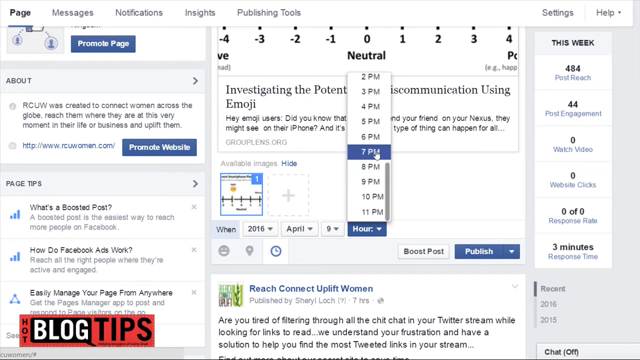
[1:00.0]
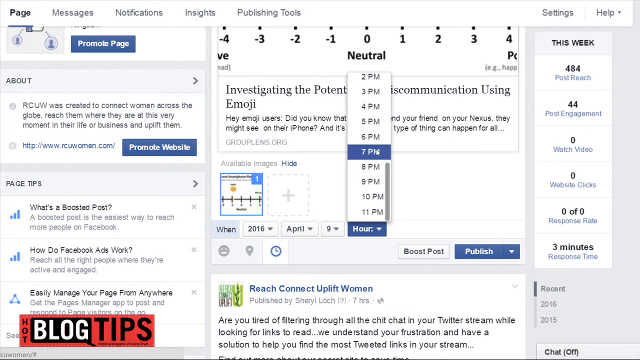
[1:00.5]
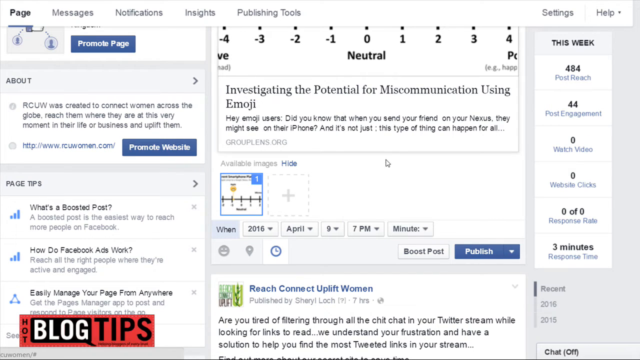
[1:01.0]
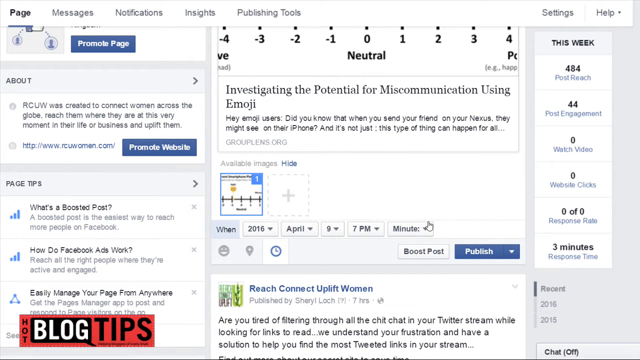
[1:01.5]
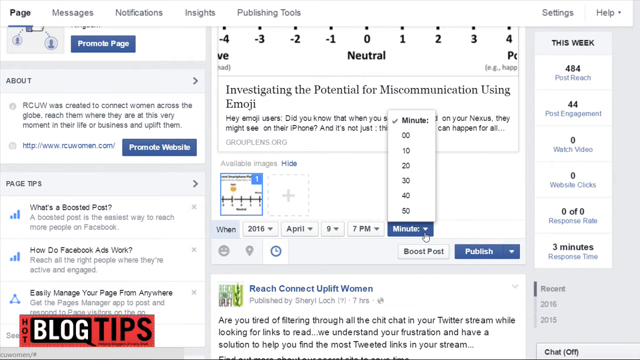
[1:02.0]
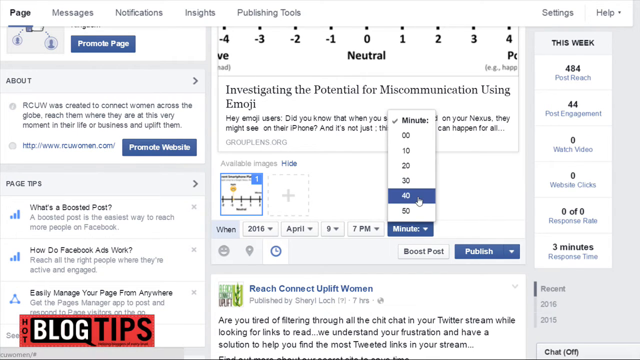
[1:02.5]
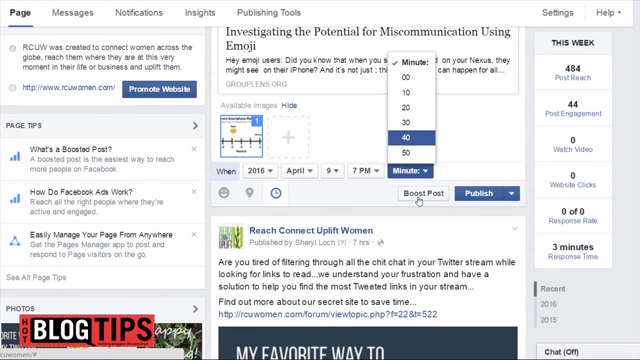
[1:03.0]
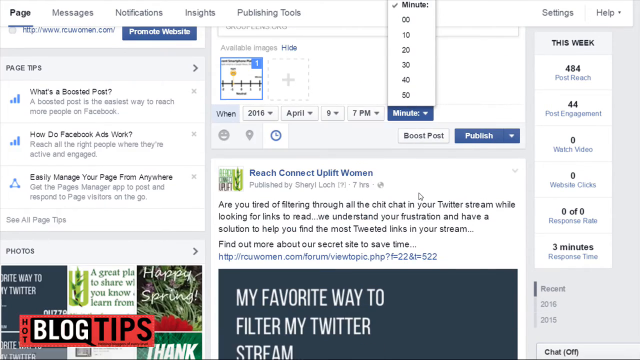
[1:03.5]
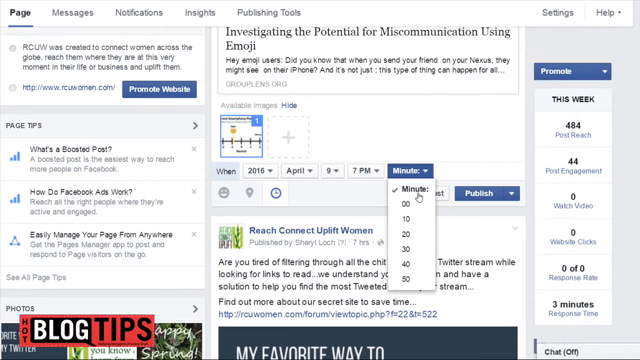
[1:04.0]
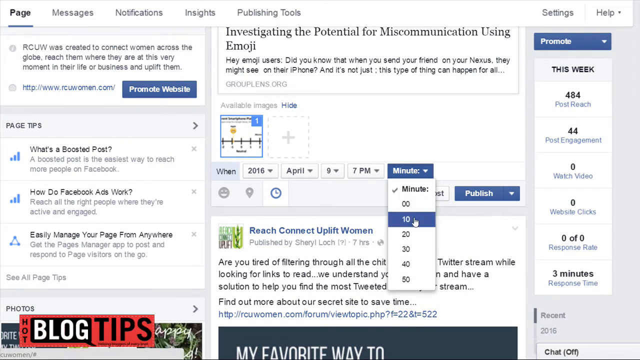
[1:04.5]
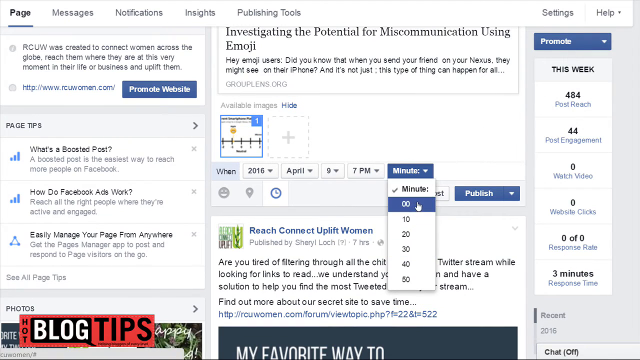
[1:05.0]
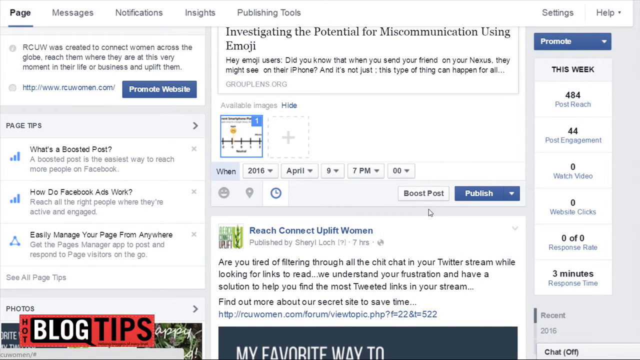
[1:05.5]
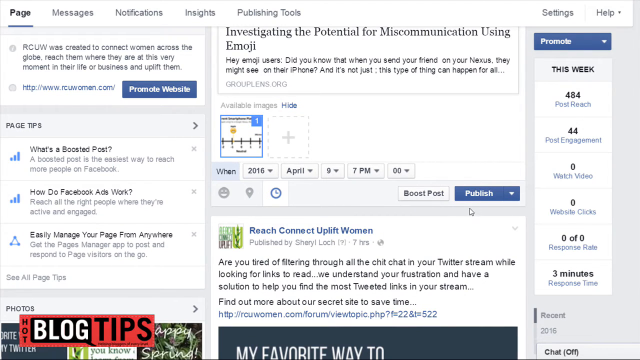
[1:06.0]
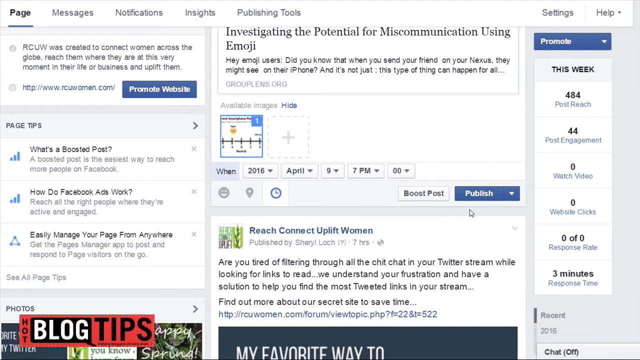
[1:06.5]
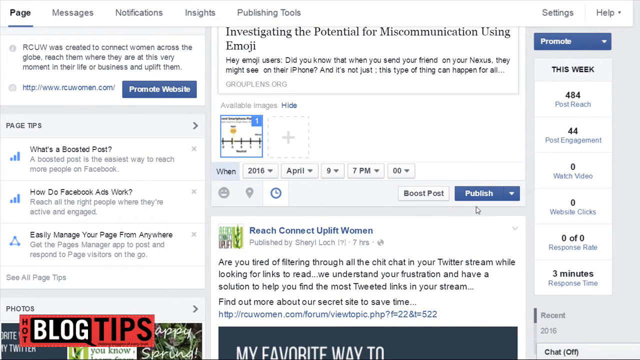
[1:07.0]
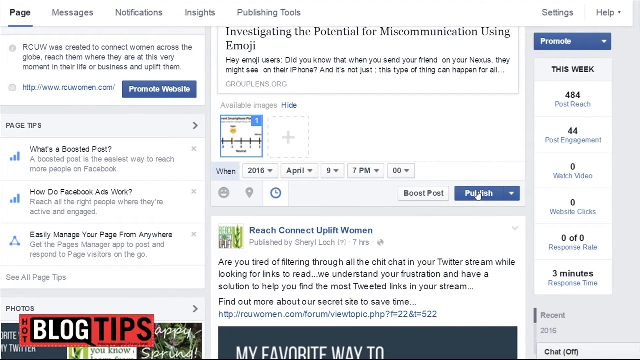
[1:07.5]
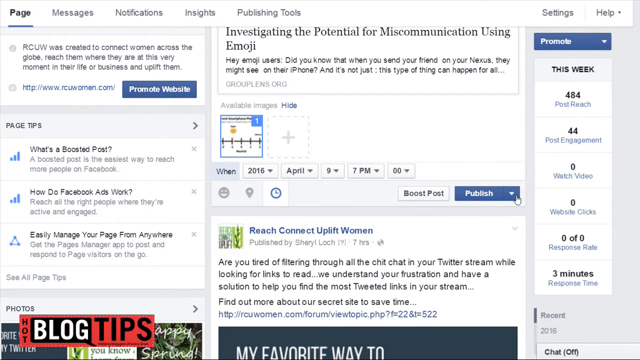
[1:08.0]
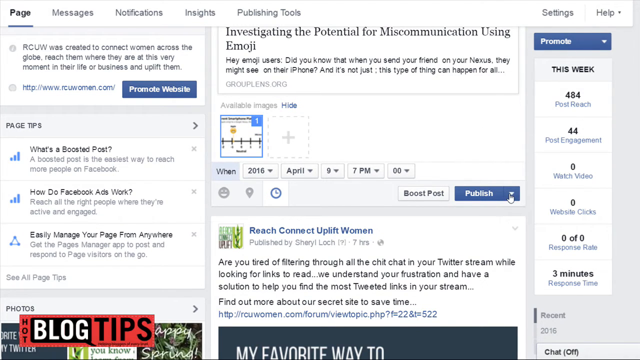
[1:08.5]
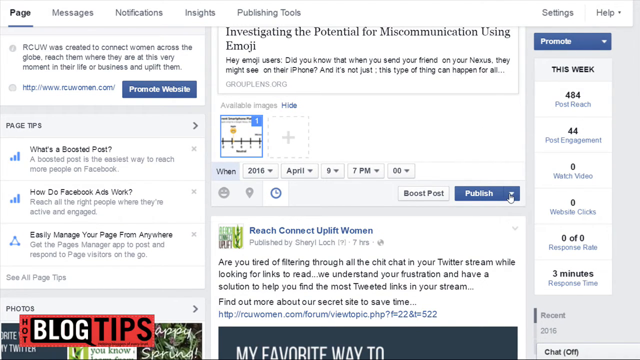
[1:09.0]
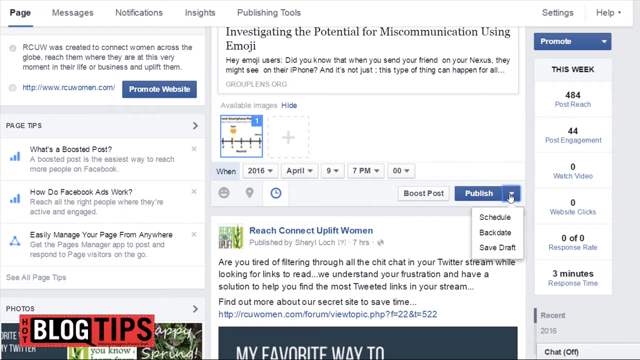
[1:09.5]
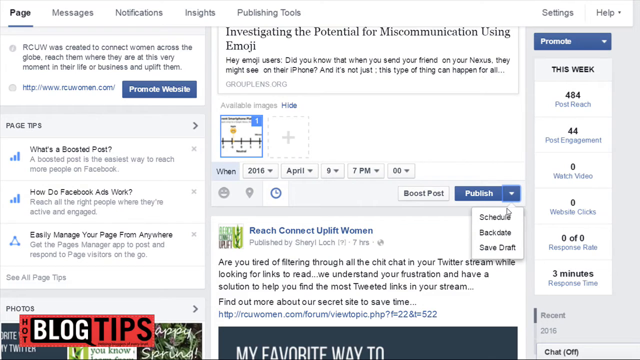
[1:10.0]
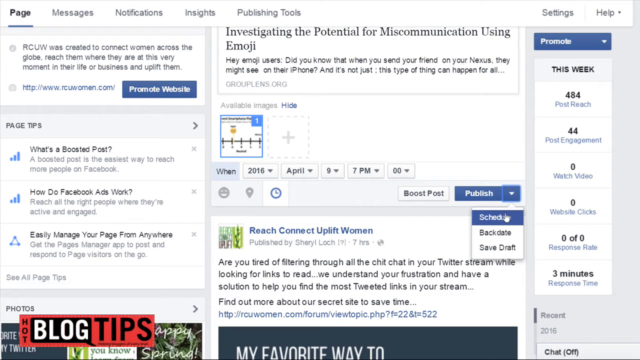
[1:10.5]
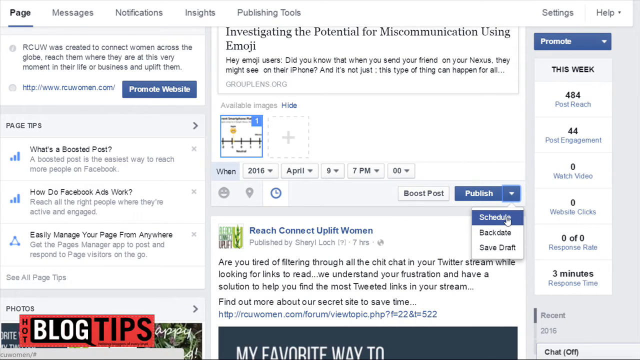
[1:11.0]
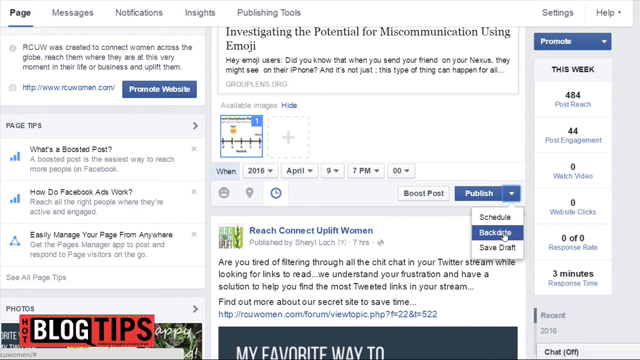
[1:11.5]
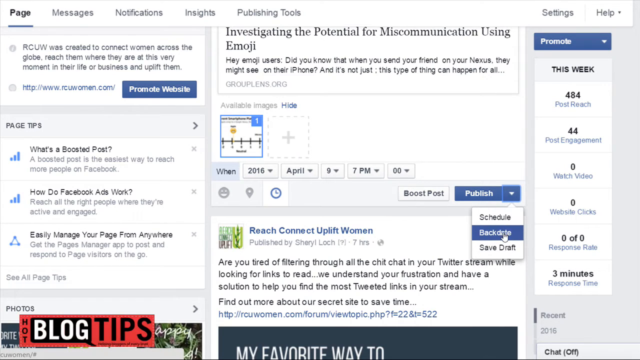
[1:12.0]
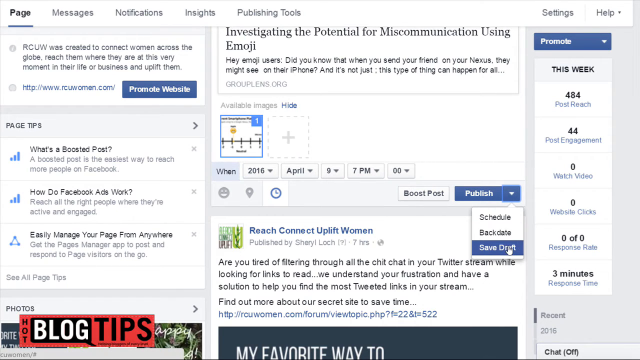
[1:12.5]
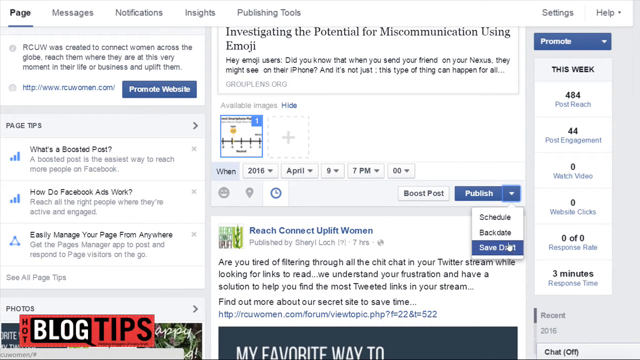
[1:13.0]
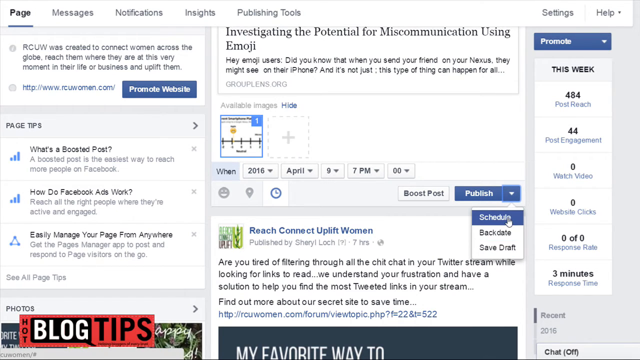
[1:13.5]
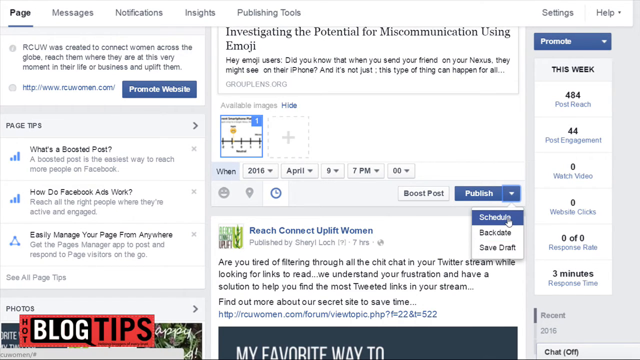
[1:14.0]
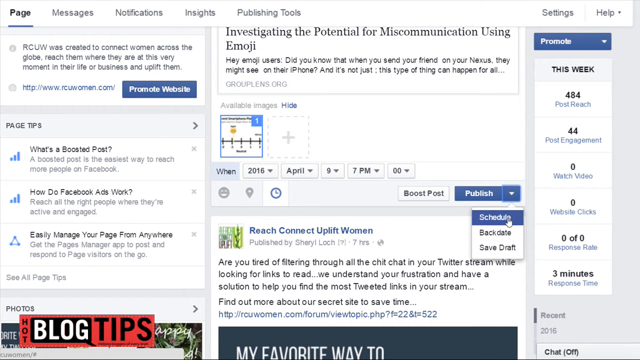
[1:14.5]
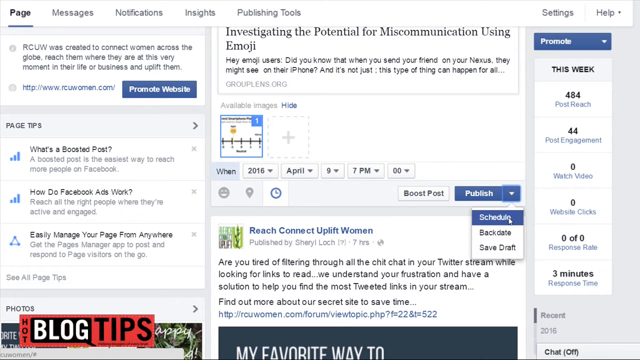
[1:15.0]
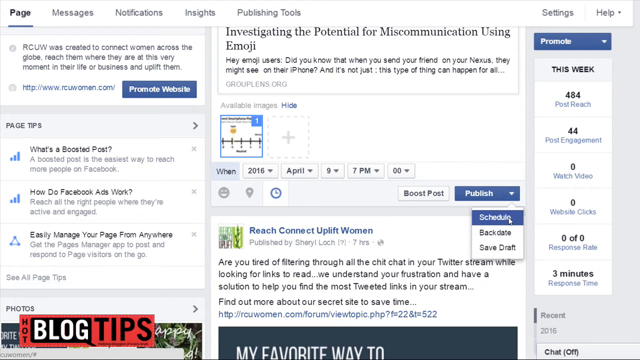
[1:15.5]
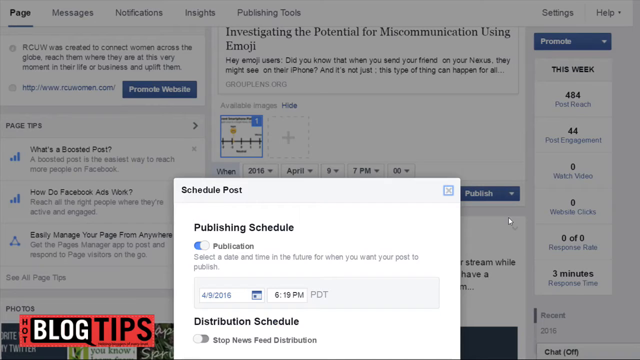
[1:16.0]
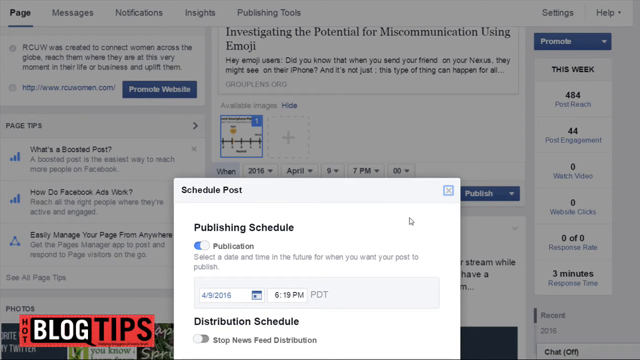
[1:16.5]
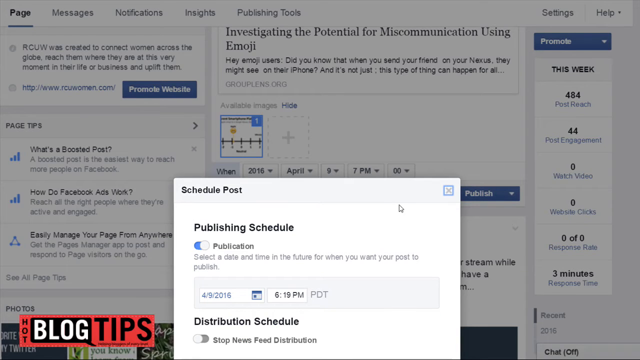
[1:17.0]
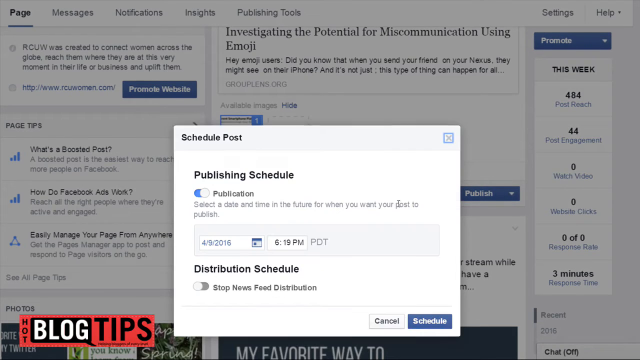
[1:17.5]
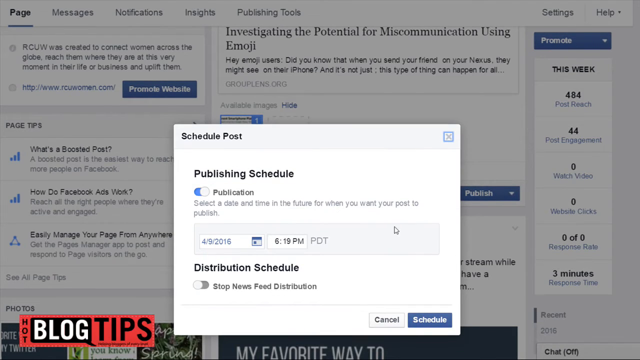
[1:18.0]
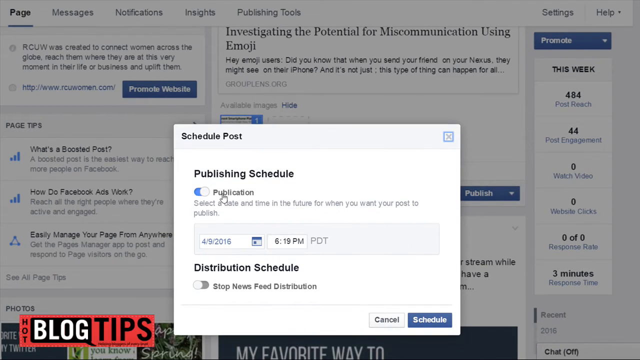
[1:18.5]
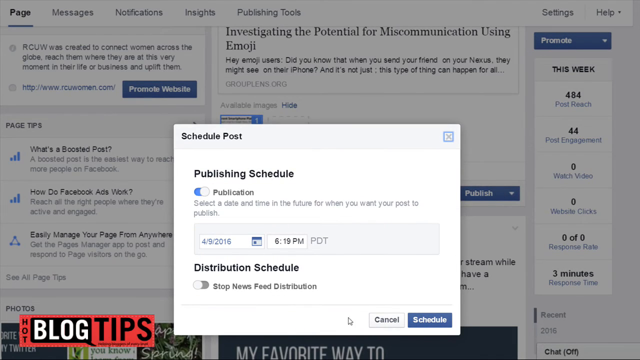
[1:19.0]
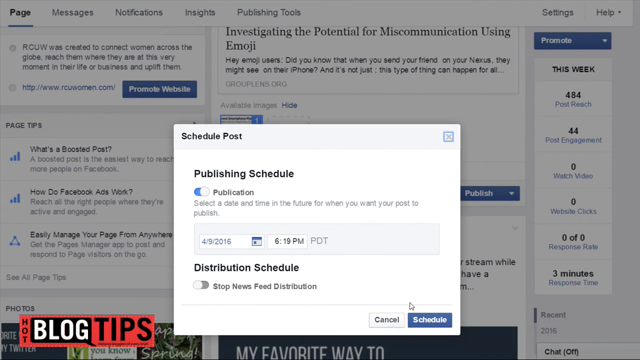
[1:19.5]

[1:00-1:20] In the post section, the time settings still show 2016 for the year, April for the month and the 9th for the day, with 7 p.m. selected and the minutes at zero. The user hovers over the publish button, which has a dropdown menu with three options: schedule, backdate and save draft. They click schedule, which brings up another window that does not take up most of the screen; it is kind of down below and apparently a little cut off. It says "schedule post" and "publishing schedule", with a toggle that is turned on, and "publication", with text underneath reading "select a date, time, and future for when you want your post to publish". The date is entered as 4-9-2016, with a calendar icon and the date next to it. The user clicks schedule.